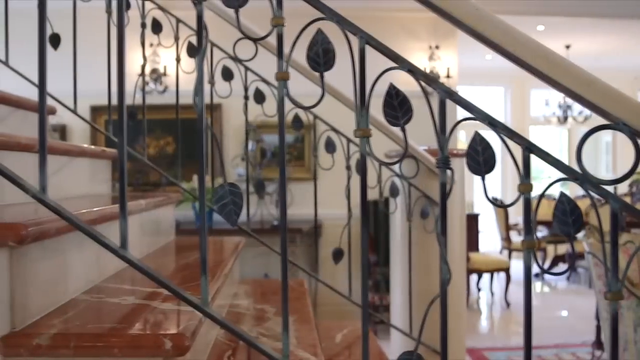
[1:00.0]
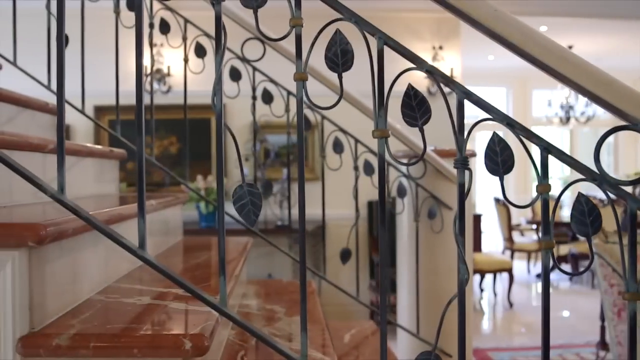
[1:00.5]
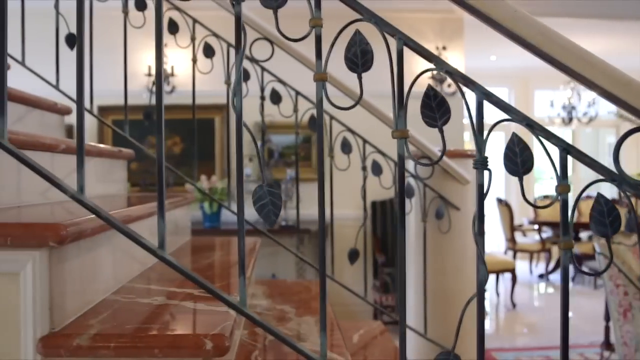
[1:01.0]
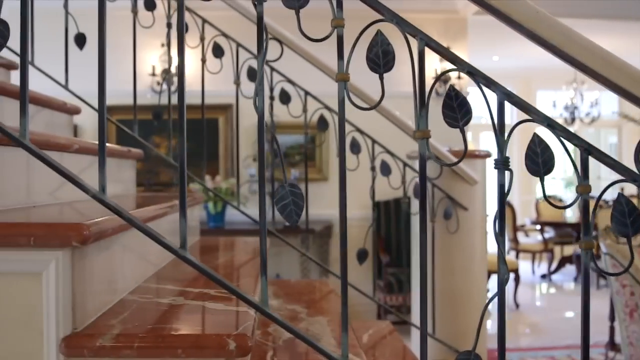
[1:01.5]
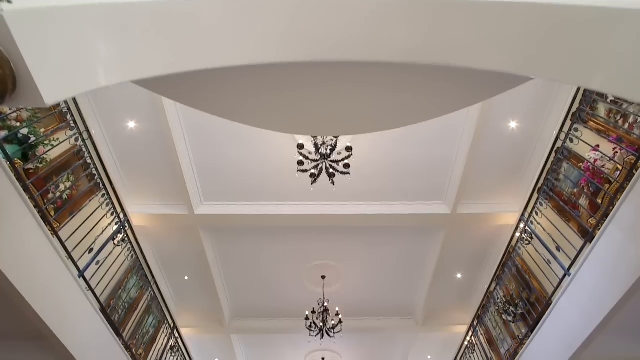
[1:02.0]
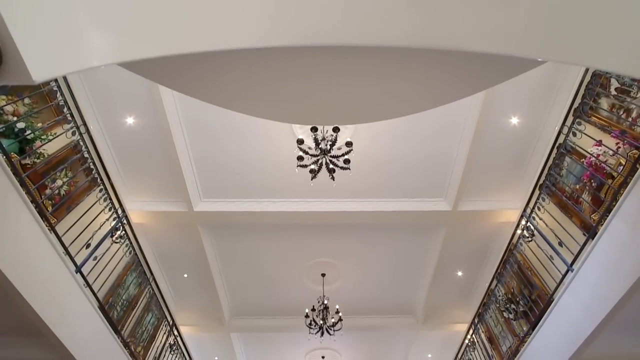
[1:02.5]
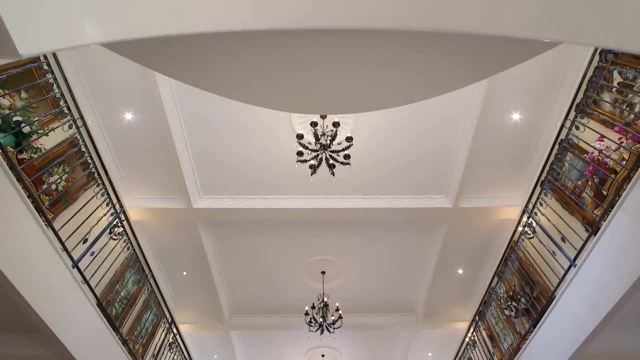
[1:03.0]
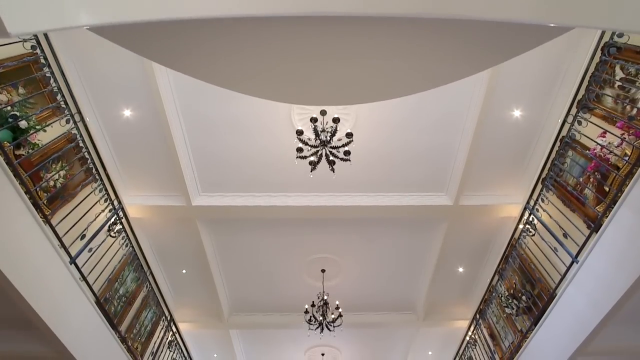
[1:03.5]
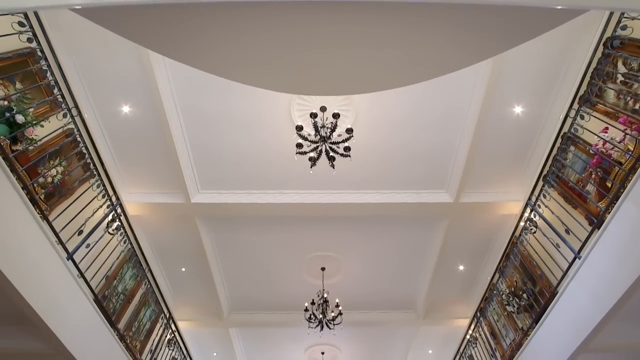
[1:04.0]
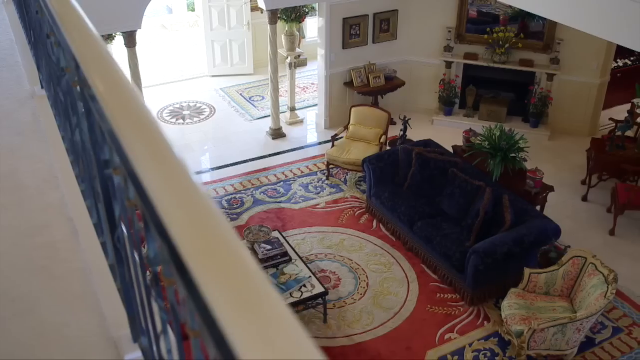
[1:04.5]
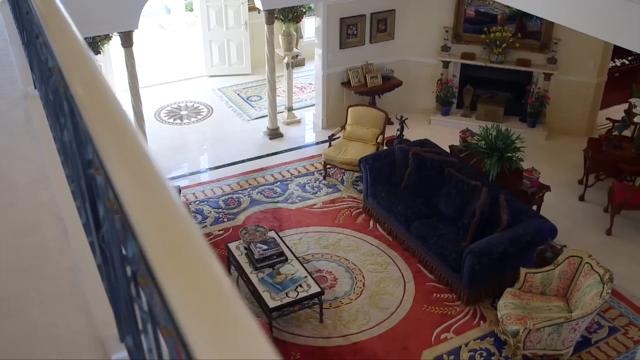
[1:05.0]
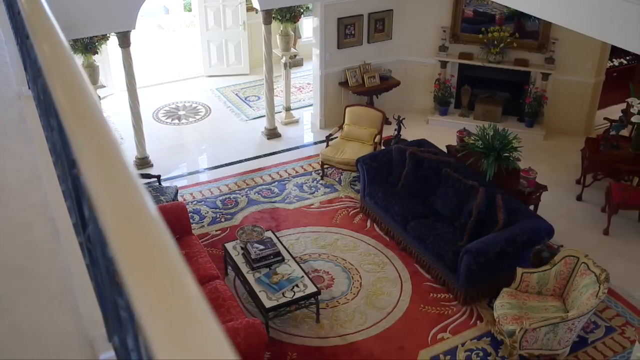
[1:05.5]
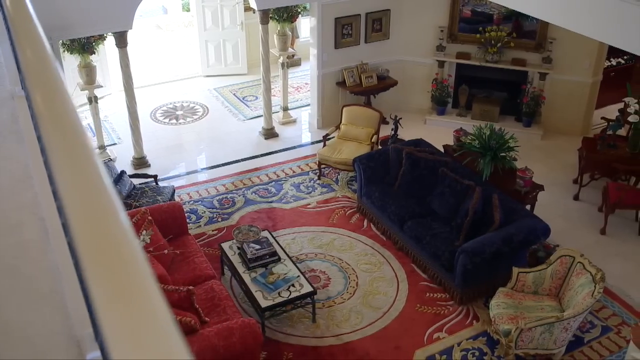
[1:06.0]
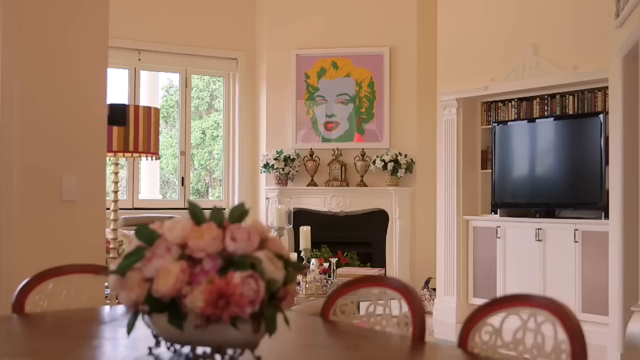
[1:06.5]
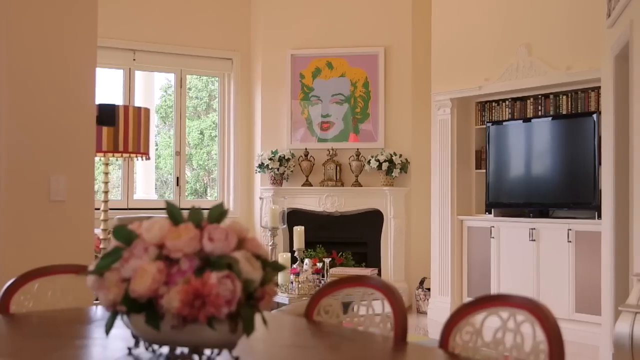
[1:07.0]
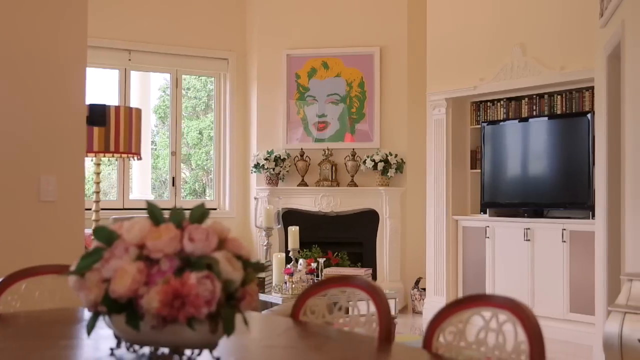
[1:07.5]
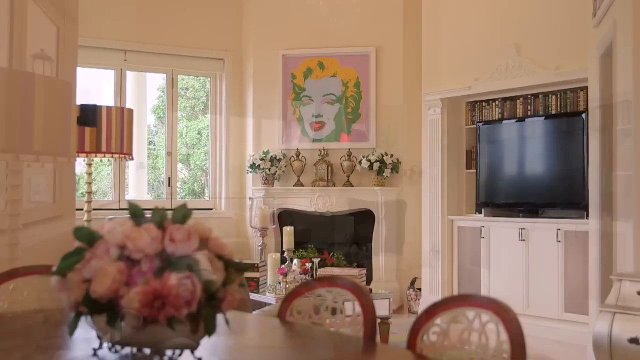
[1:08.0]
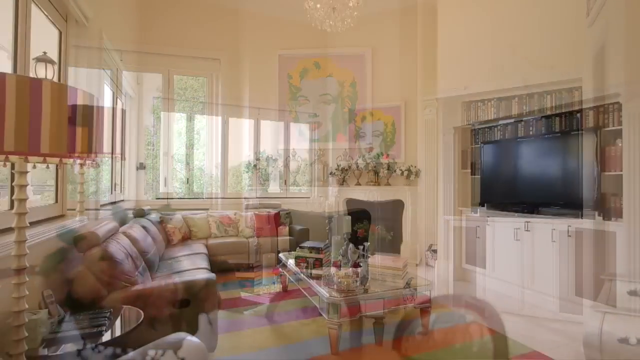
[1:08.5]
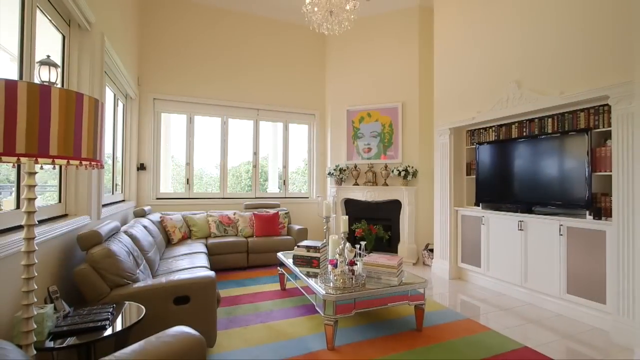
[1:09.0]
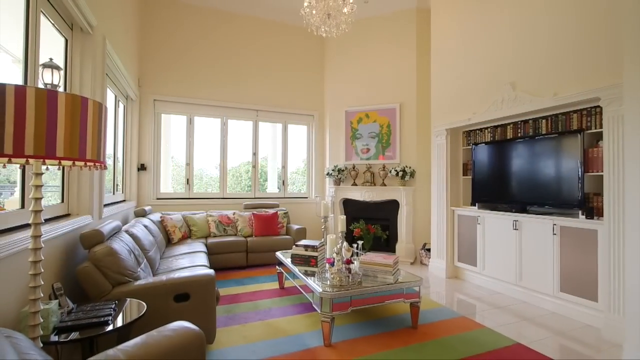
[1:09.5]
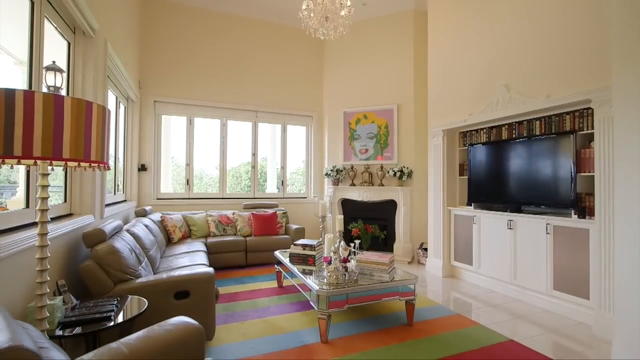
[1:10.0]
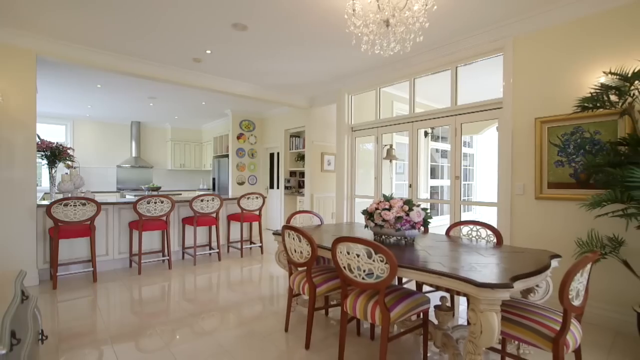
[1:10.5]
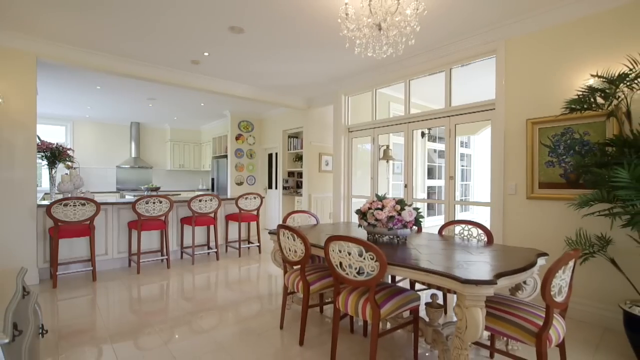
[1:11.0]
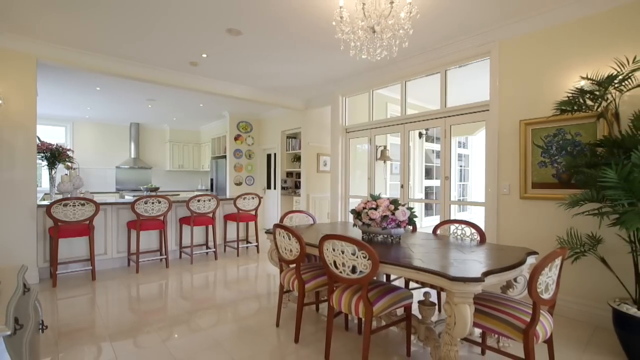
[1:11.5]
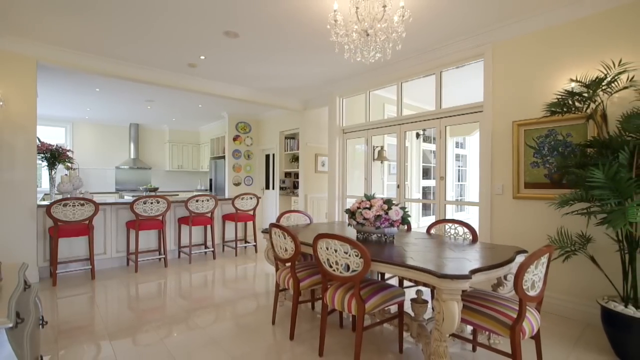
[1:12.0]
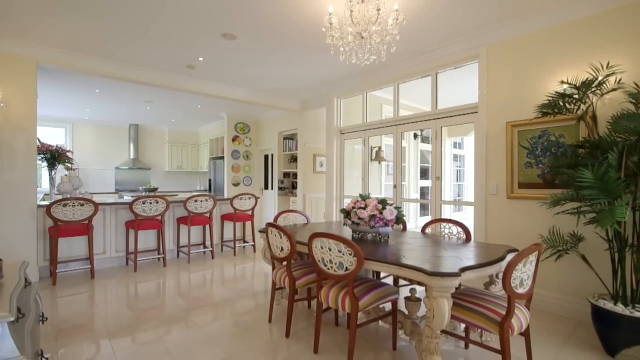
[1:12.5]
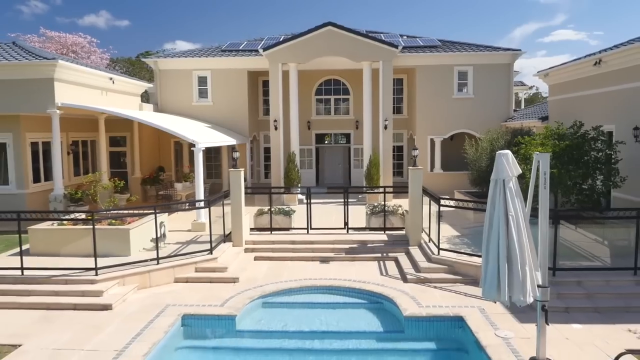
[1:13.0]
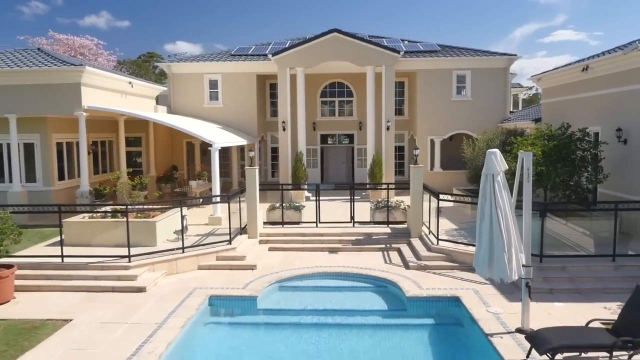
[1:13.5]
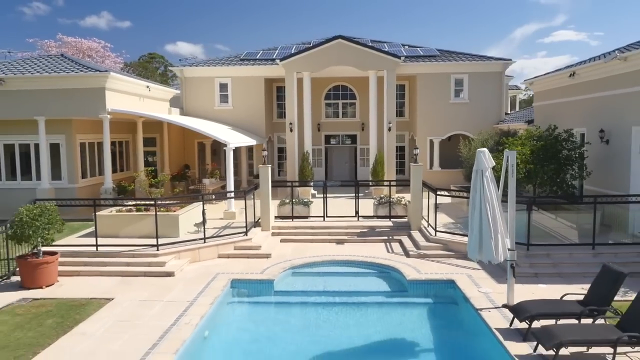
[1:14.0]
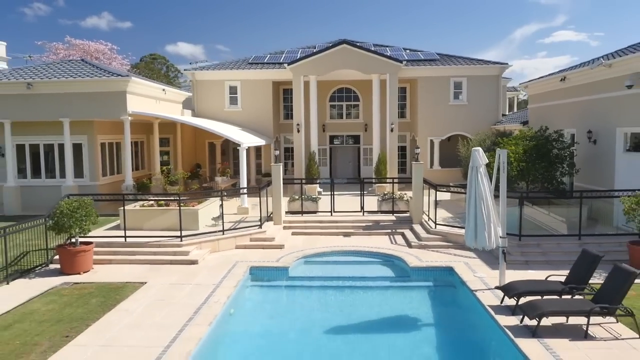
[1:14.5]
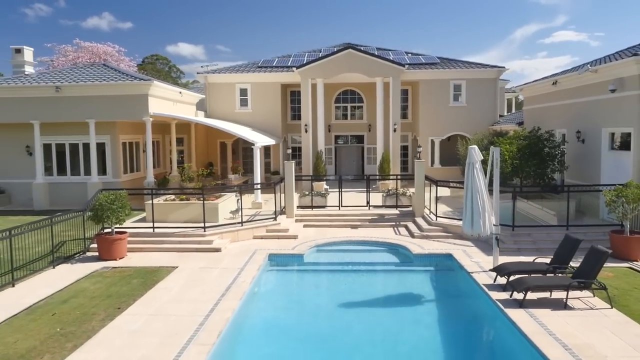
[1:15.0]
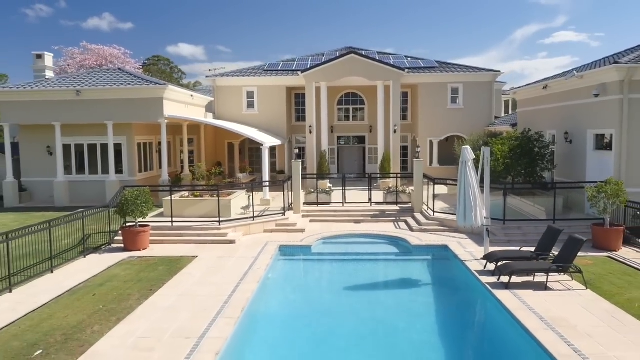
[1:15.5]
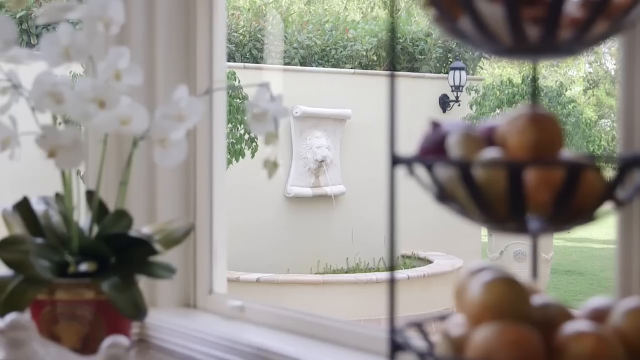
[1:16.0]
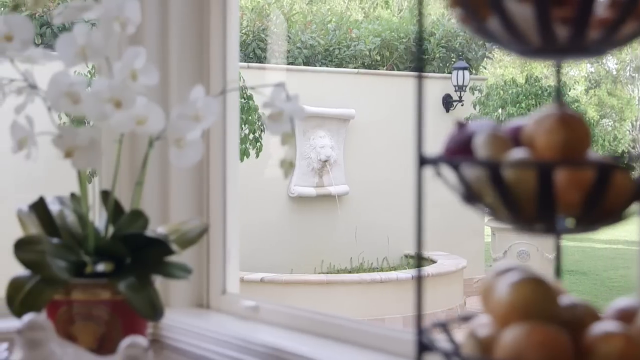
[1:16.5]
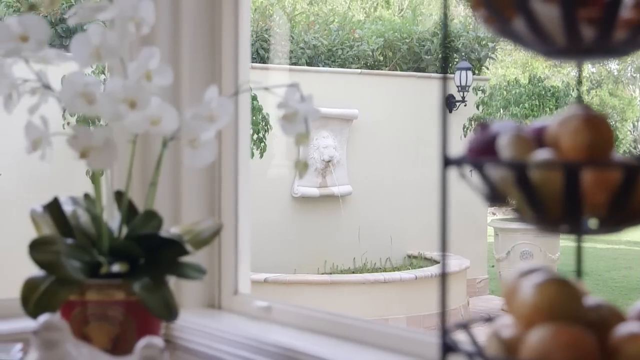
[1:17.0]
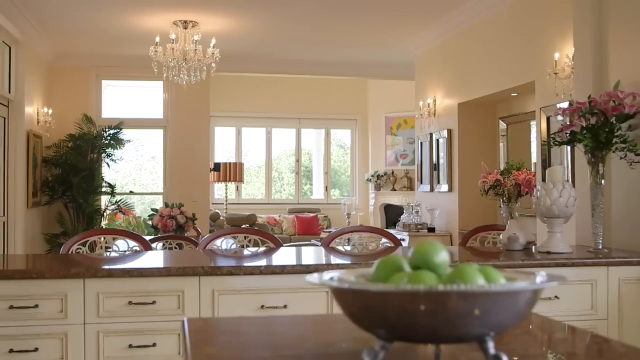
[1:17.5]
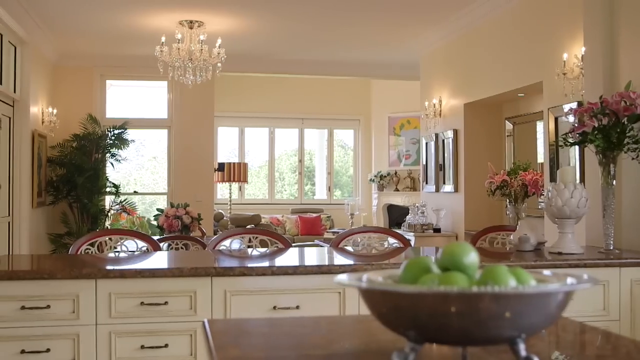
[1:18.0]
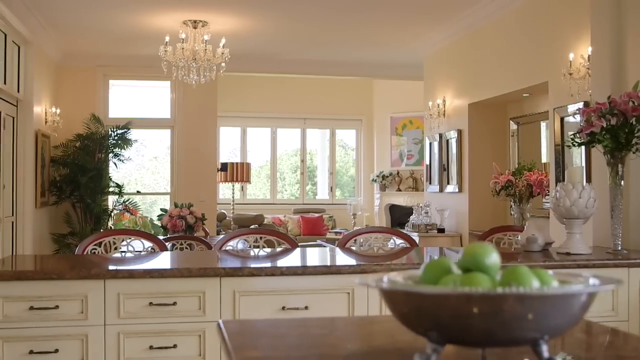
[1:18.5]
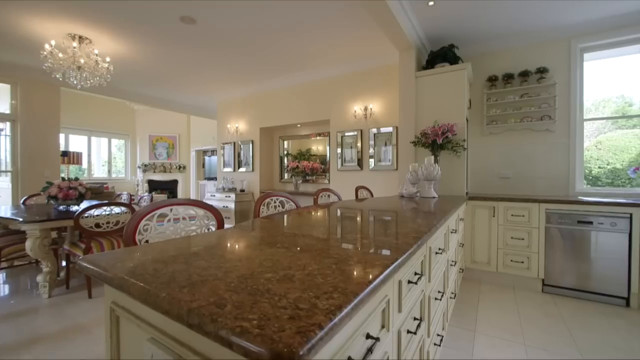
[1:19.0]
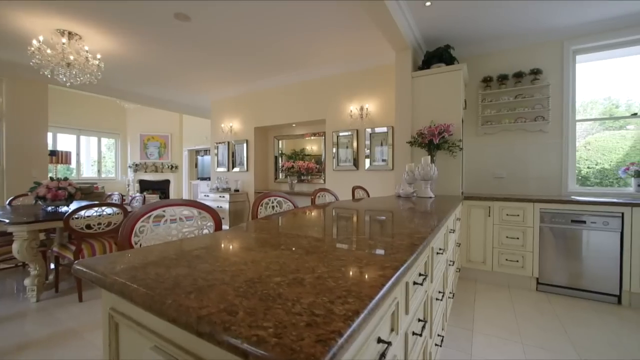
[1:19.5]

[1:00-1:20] The house is viewed from a low camera position. The camera gives a close-up of the staircase, then shows the ceiling from the ground floor. It then shows the ground floor from a position higher than the stairs, and at the same level seems to show different angles of the ceiling as it moves. The ceiling is white and fitted with white chandeliers. The view of the sitting room from above shows a red carpet with mosaic designs, and other carpets outside also have mosaic designs. In a TV room, a framed drawing on the wall shows a lady with yellow hair, a white face and blue lipstick. A black camera is fitted inside the wall unit. The camera moves to a kitchen with red chairs; the center of the kitchen looks like a dining room with a table. The camera moves away from the house to the outside, then goes back inside the kitchen to show the table with the chairs.